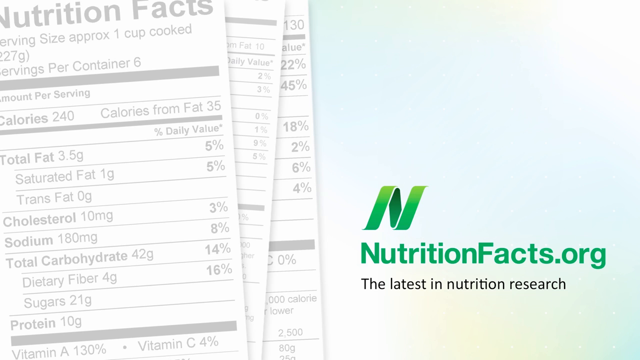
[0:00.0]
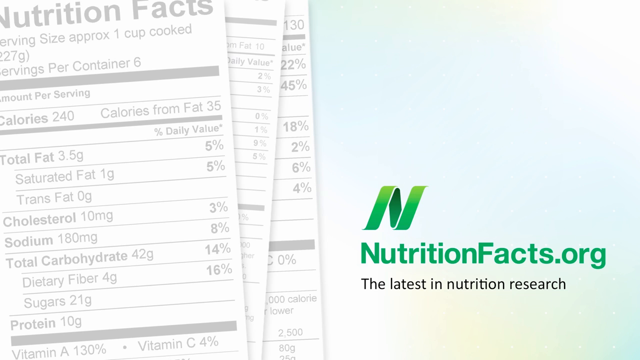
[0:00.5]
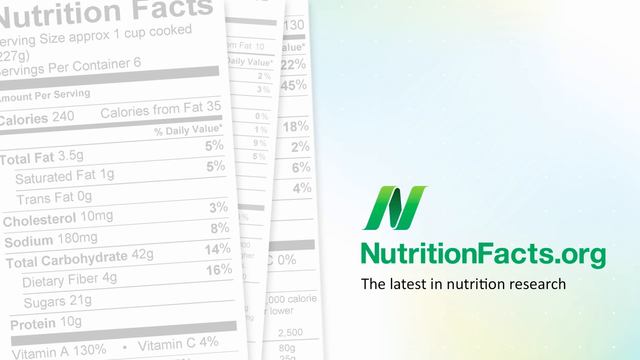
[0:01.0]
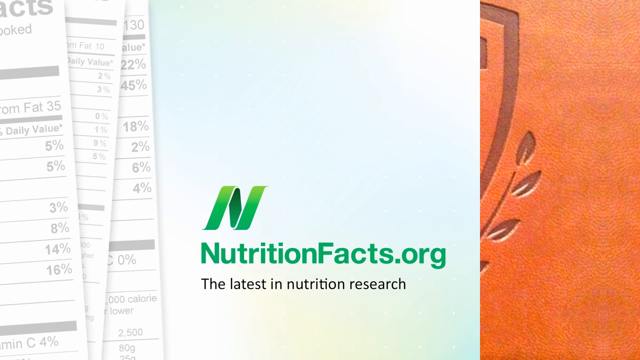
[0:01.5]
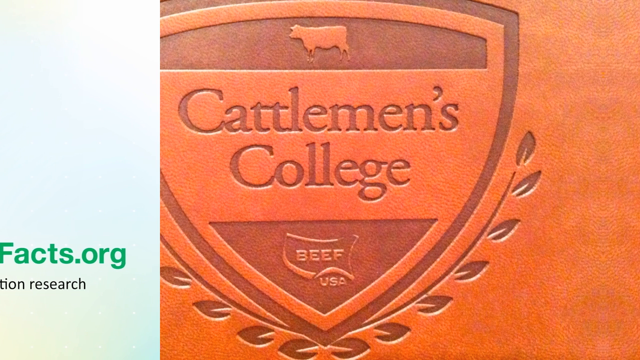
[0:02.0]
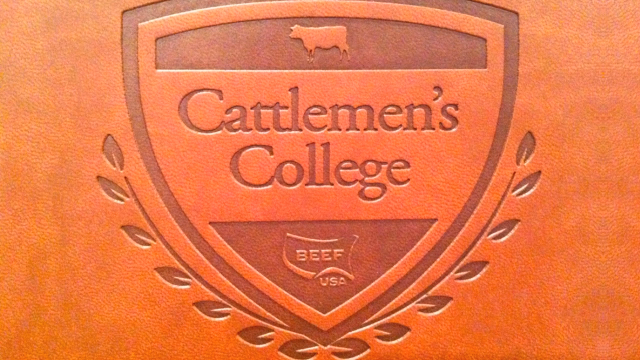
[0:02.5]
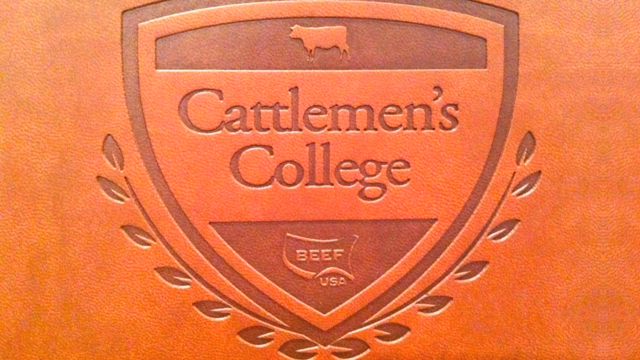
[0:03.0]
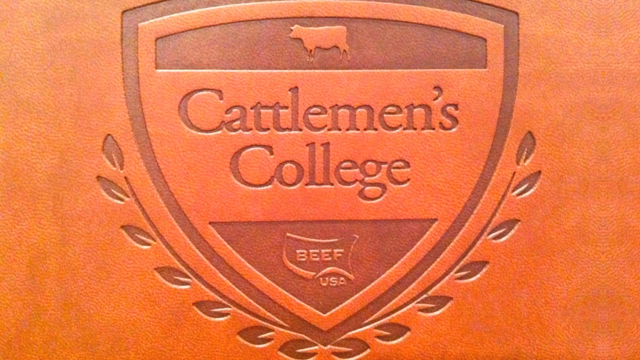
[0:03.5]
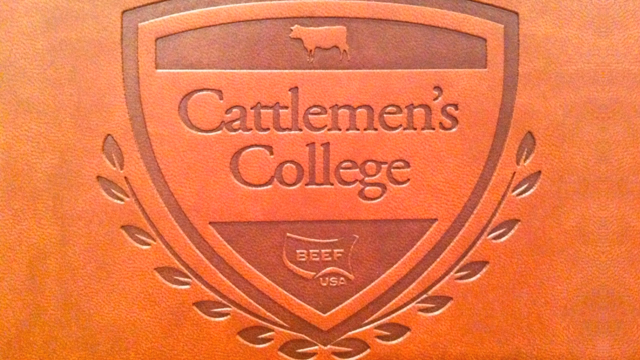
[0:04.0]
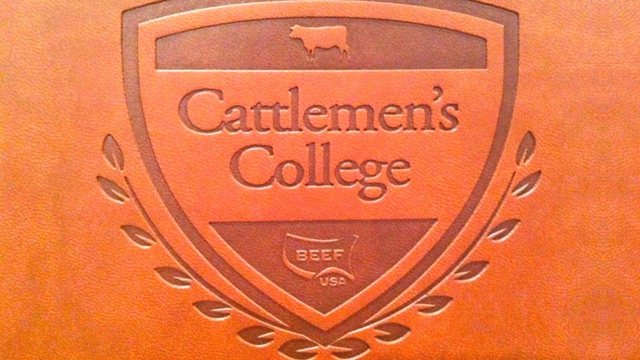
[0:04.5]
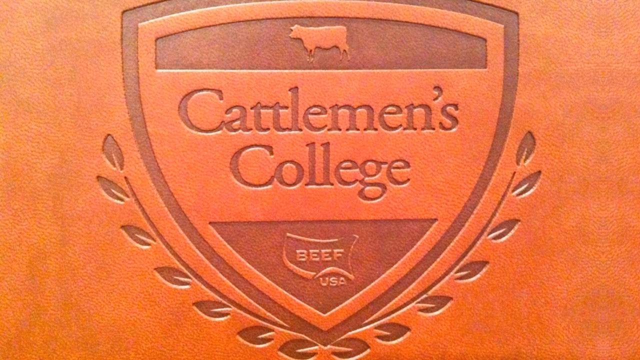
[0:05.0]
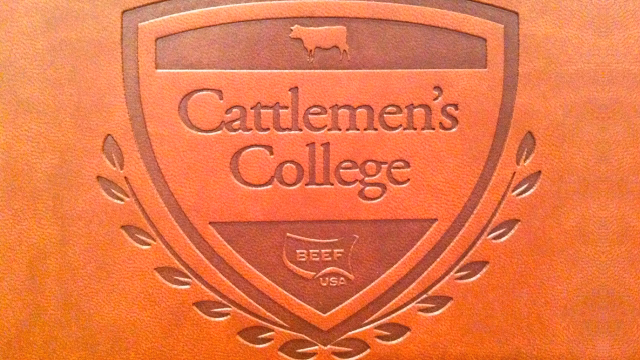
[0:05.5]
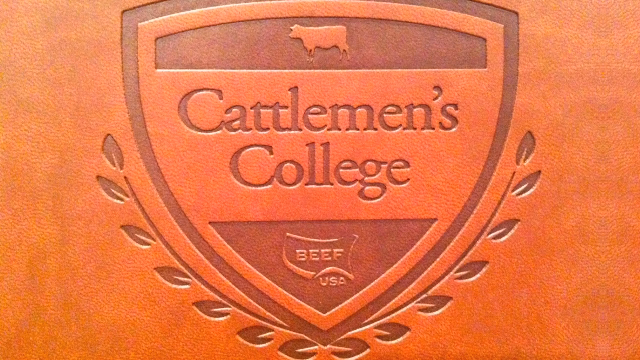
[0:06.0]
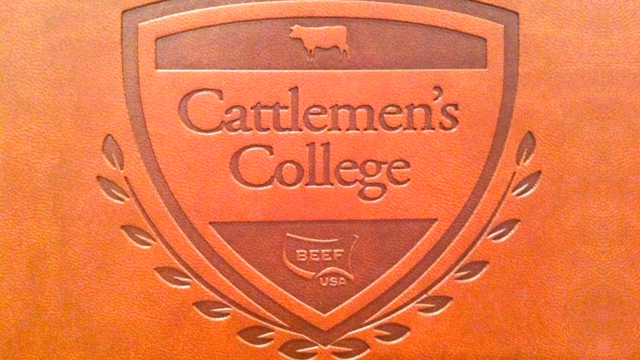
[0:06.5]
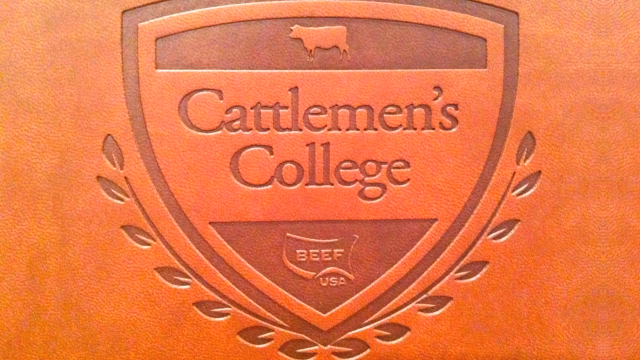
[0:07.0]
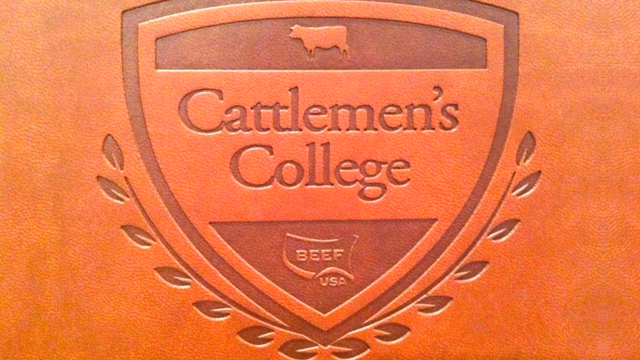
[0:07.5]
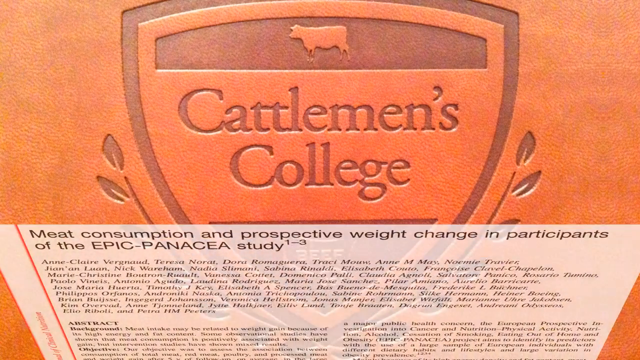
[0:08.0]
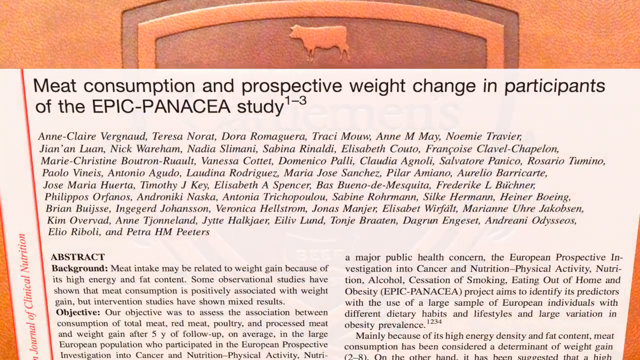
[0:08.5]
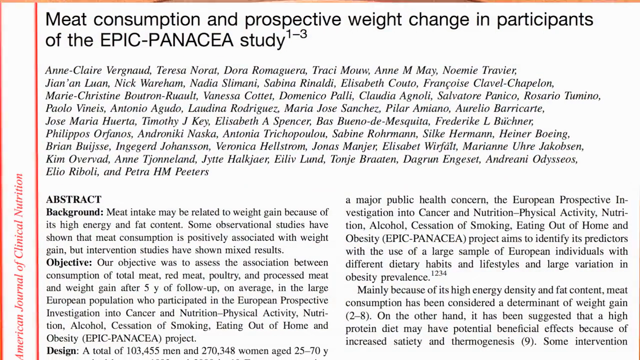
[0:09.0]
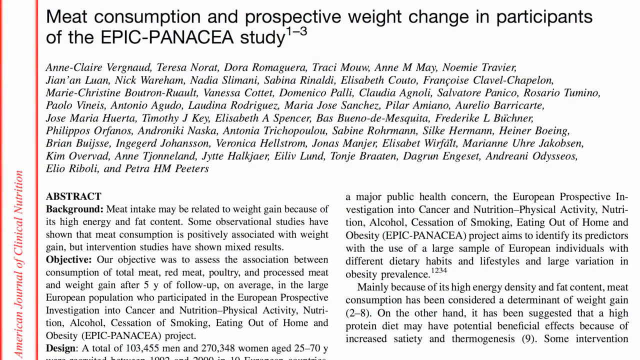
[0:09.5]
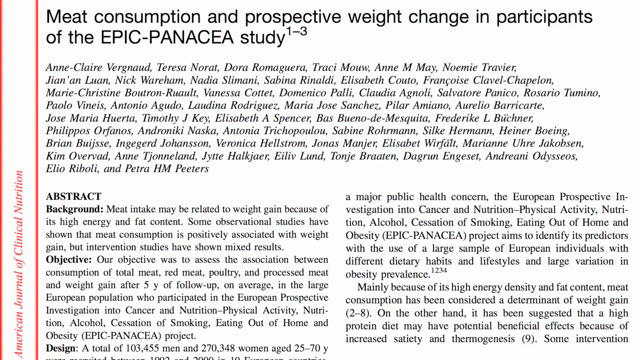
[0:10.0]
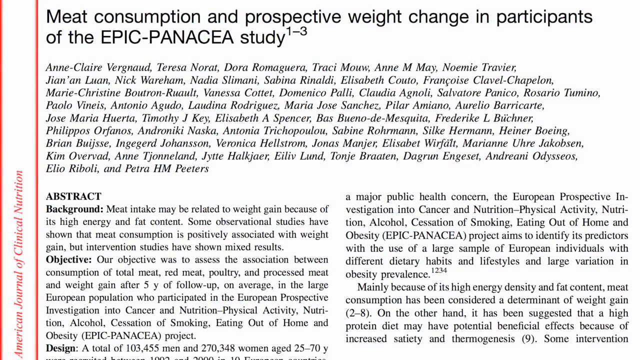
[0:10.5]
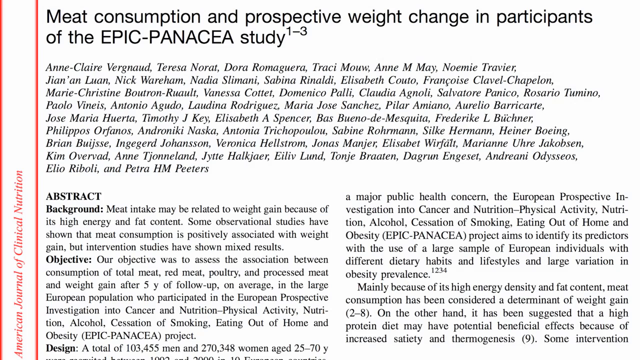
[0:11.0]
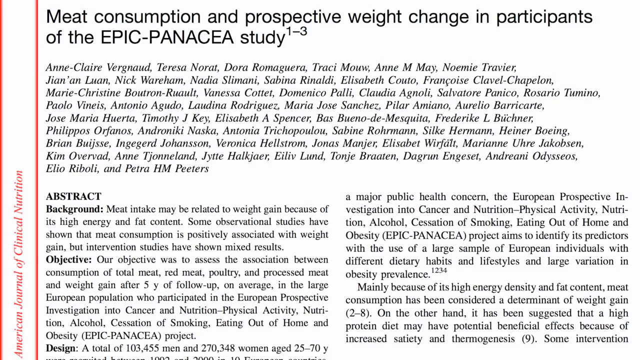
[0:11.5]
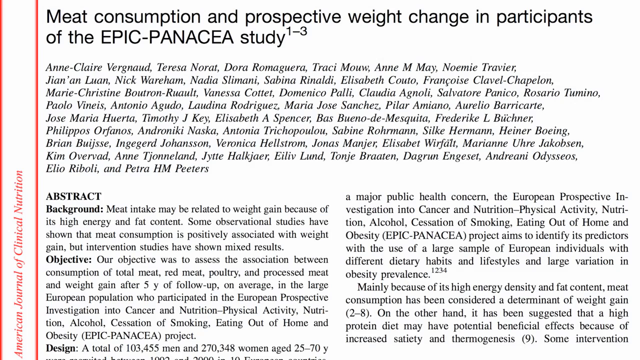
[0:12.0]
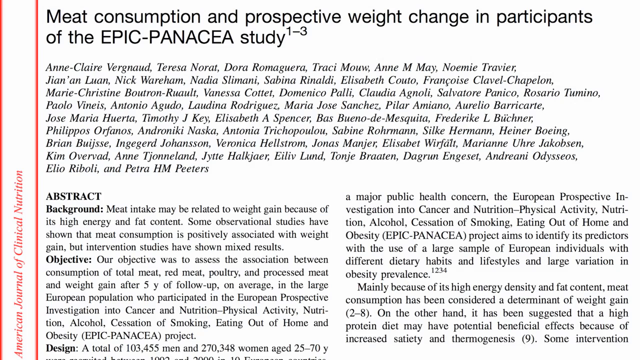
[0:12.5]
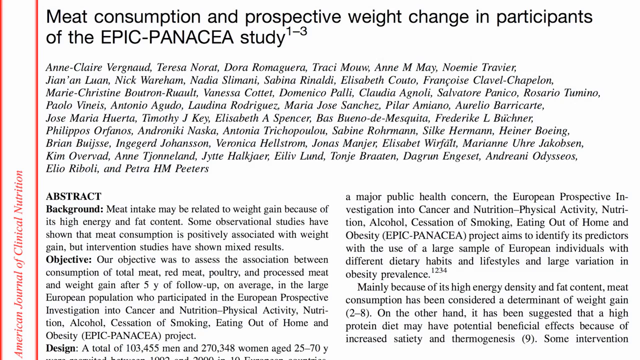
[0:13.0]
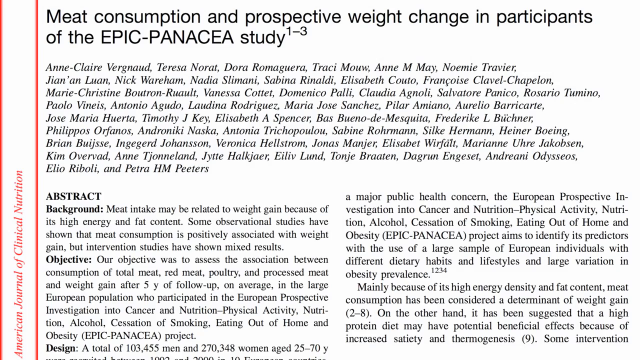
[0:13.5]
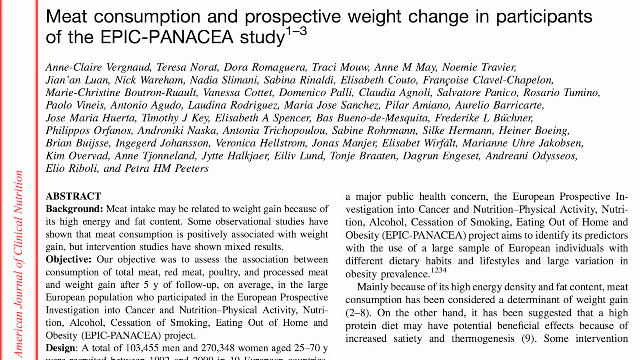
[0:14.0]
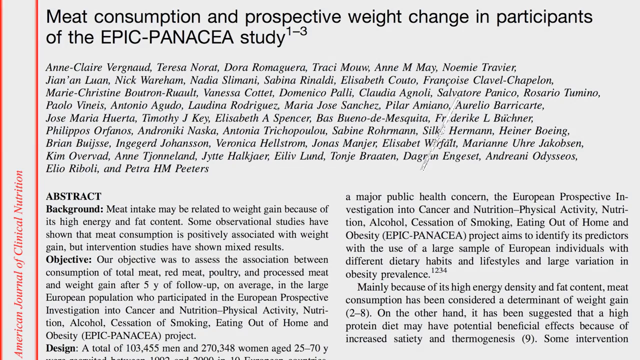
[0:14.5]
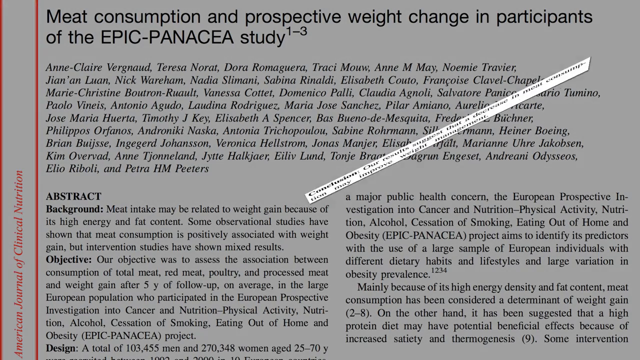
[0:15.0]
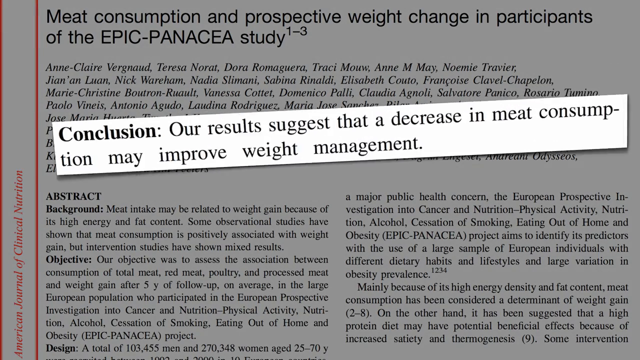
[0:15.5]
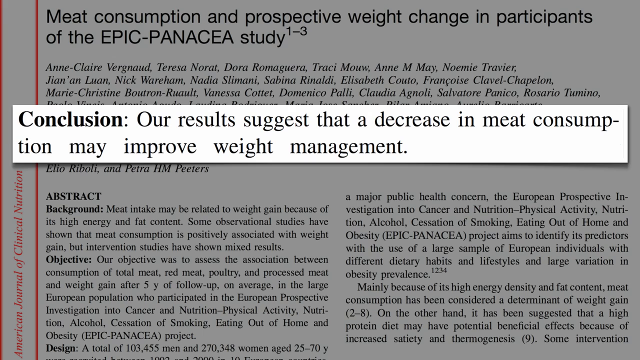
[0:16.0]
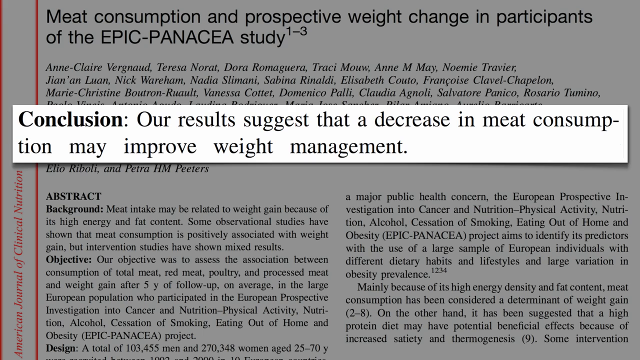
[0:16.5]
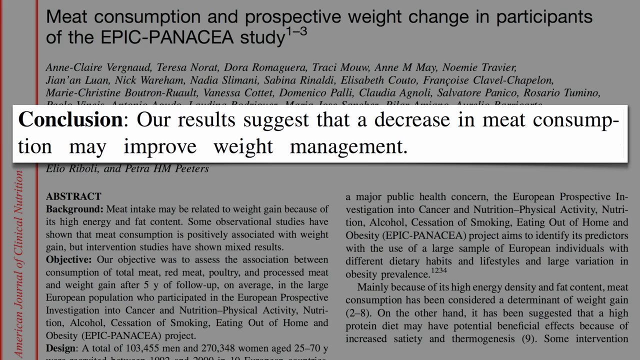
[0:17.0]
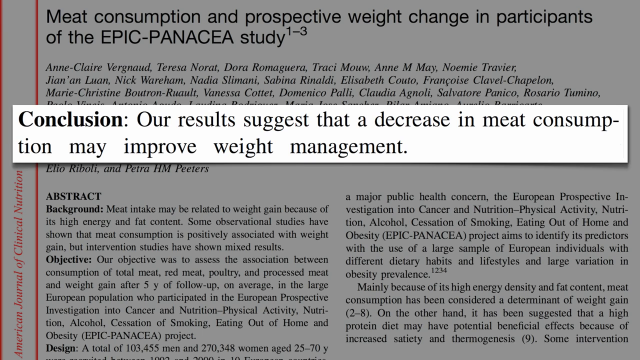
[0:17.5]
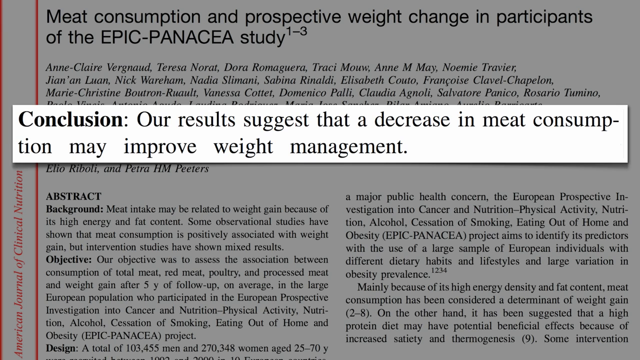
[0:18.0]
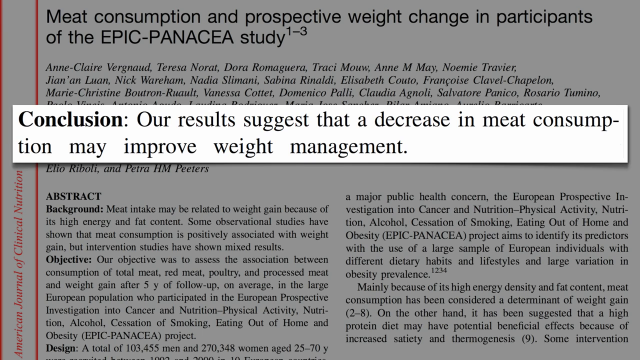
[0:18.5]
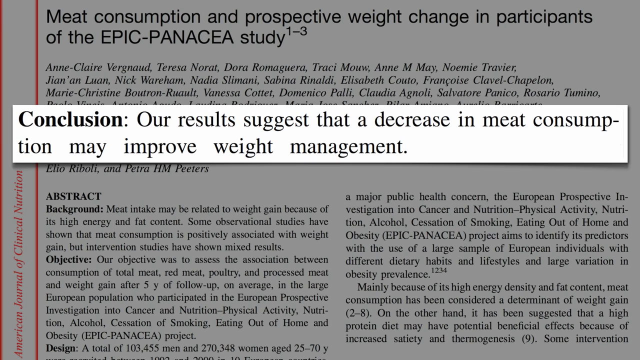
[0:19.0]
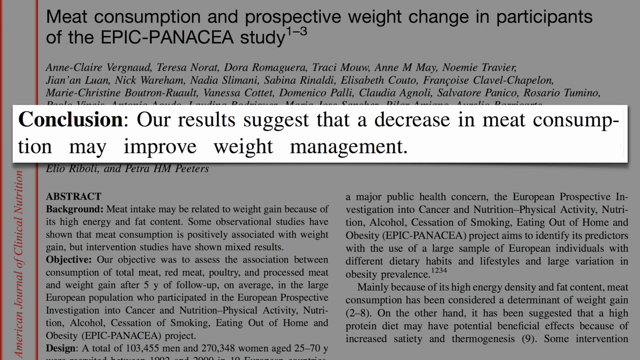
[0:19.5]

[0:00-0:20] The video opens on the website nutritionfacts.org, with the words "the latest in nutrition research" underneath the address. On the left side of the page are three Nutrition Facts labels stacked one on top of the other. After this intro slide comes a still photo of a Cattleman's College emblem that looks like it is made of leather. The emblem is carved with an arched top that comes down in a V shape, with a leaf pattern underneath the V and a silhouette of a cow above the words Cattleman's College. It lingers for several seconds, and then an article appears about meat consumption and weight change in participants. It seems to relate to weight and meat intake, and it is more like an academic article than a newspaper article, since it has an abstract.